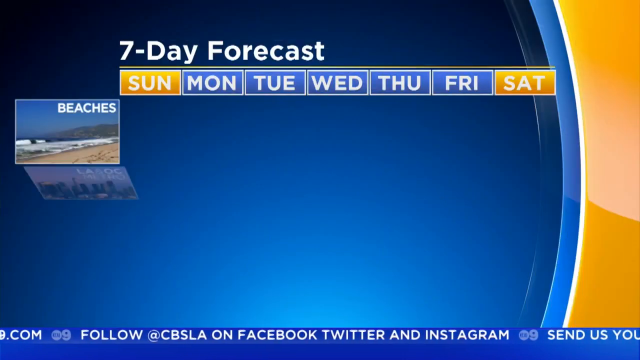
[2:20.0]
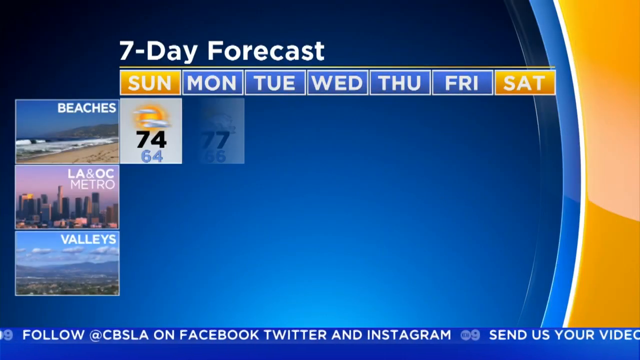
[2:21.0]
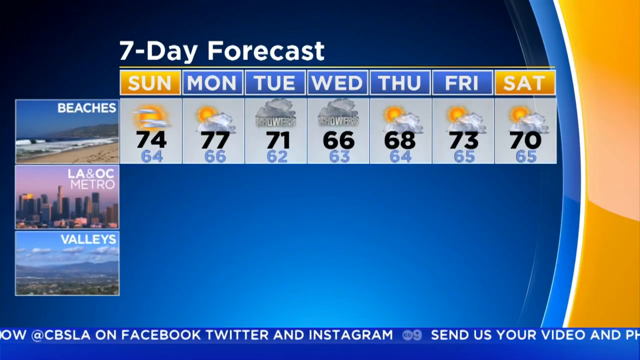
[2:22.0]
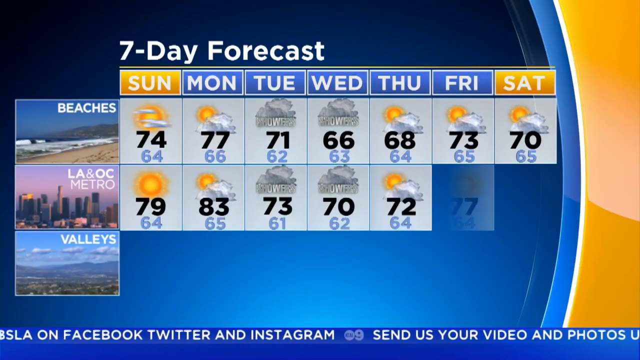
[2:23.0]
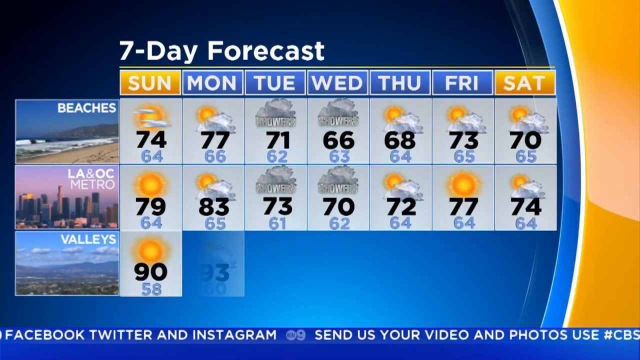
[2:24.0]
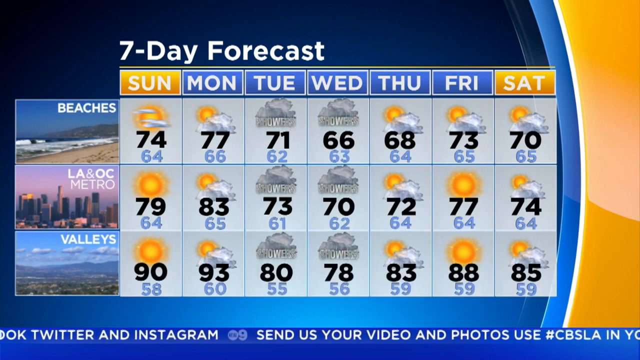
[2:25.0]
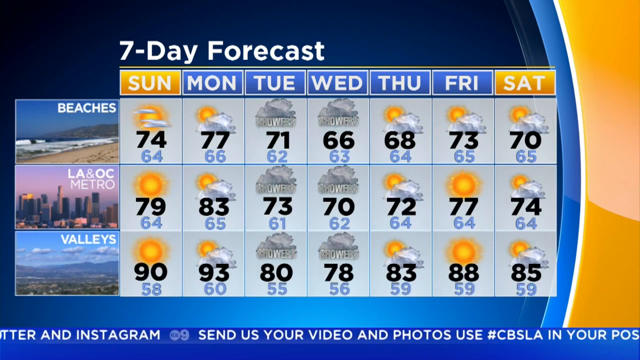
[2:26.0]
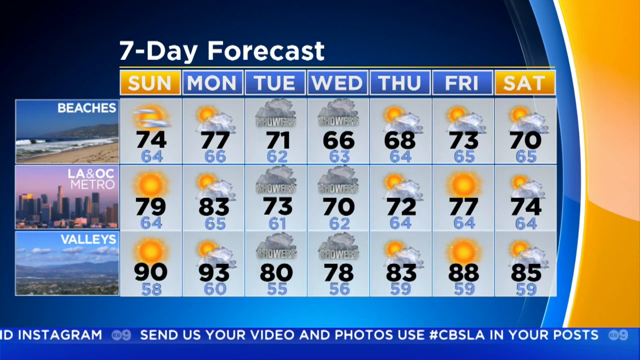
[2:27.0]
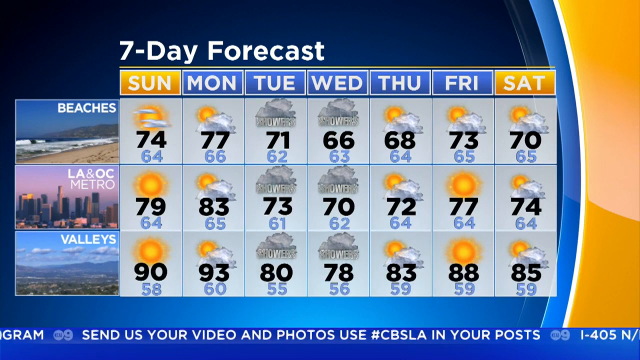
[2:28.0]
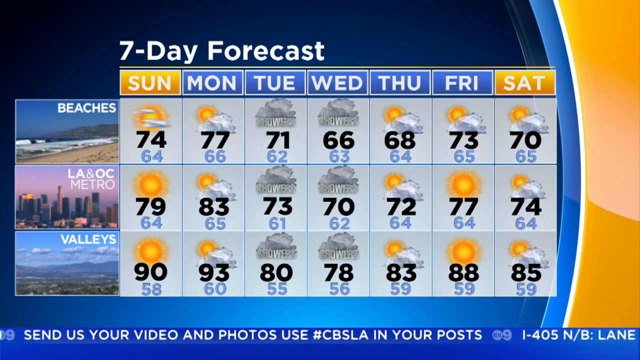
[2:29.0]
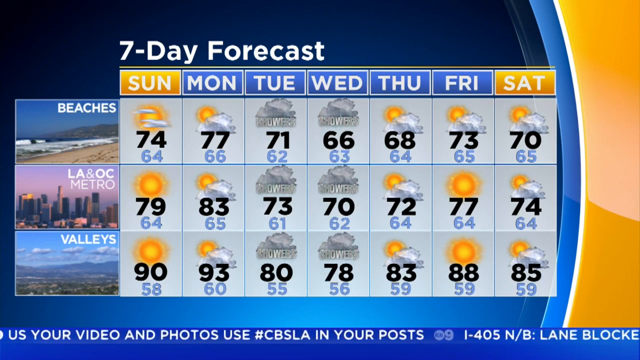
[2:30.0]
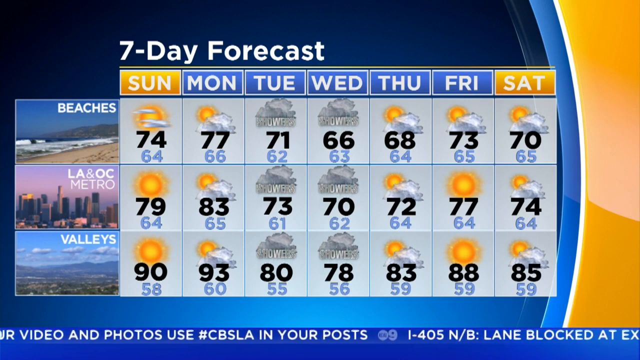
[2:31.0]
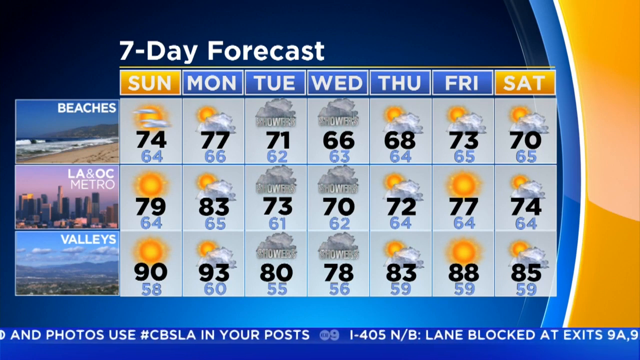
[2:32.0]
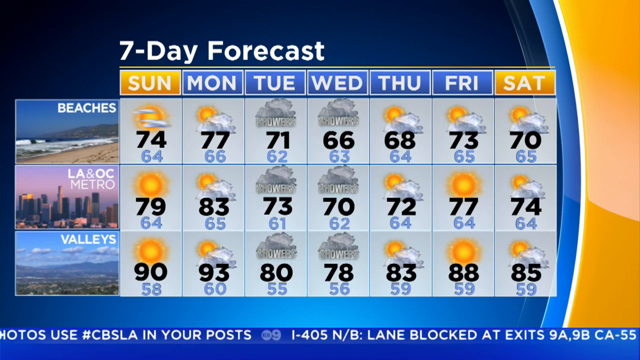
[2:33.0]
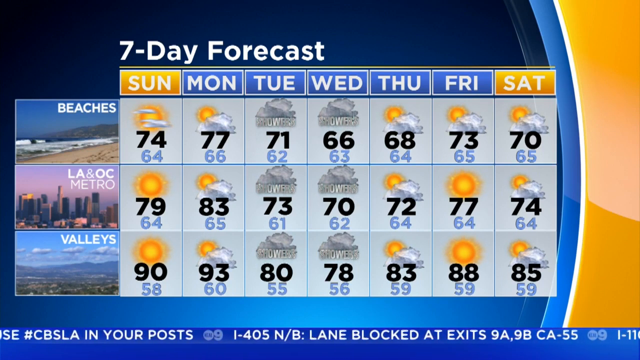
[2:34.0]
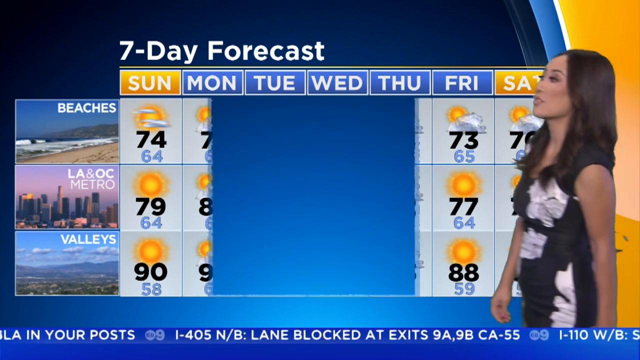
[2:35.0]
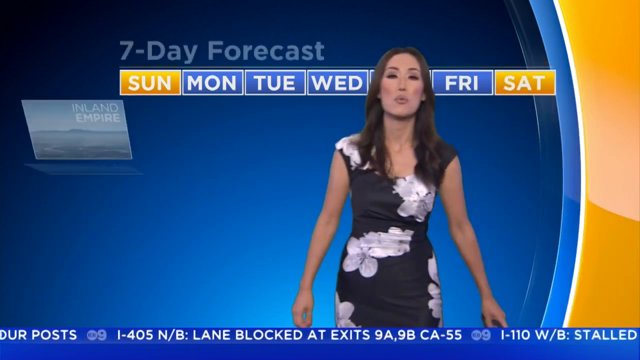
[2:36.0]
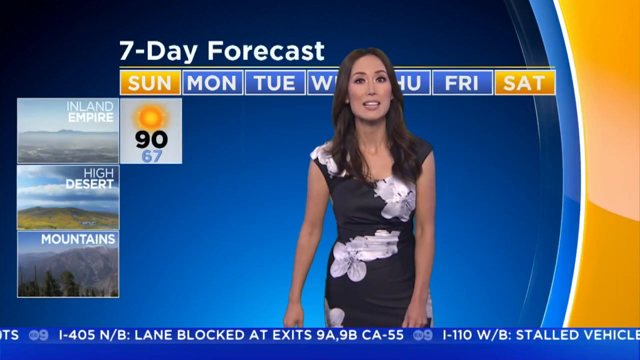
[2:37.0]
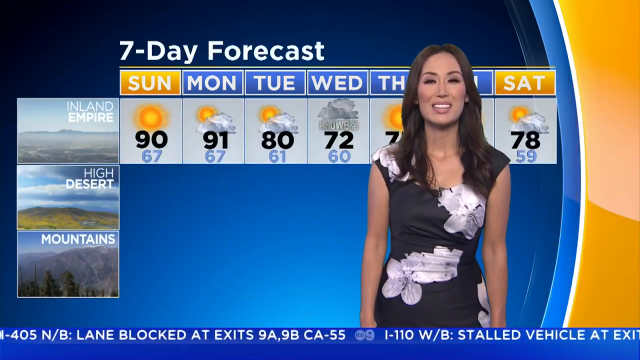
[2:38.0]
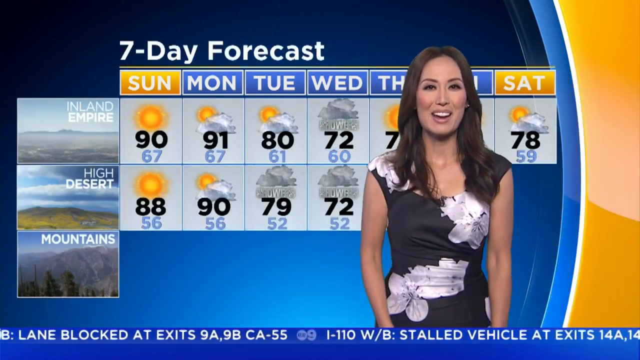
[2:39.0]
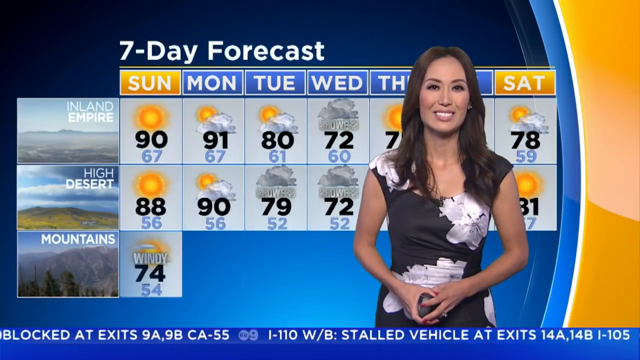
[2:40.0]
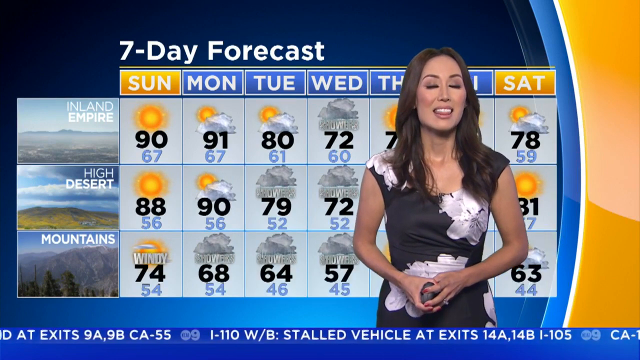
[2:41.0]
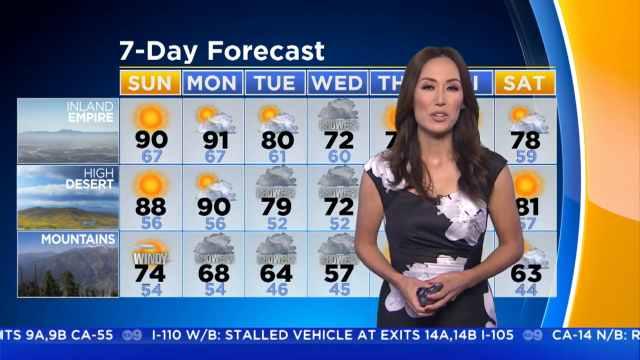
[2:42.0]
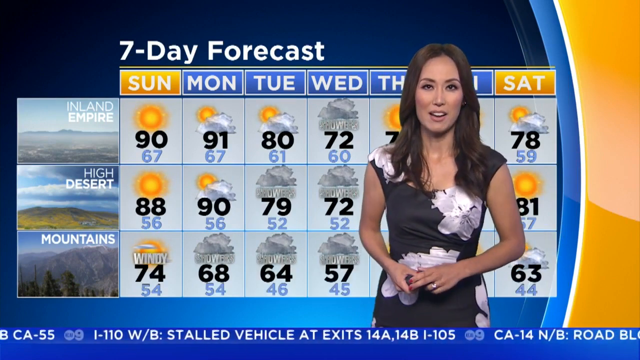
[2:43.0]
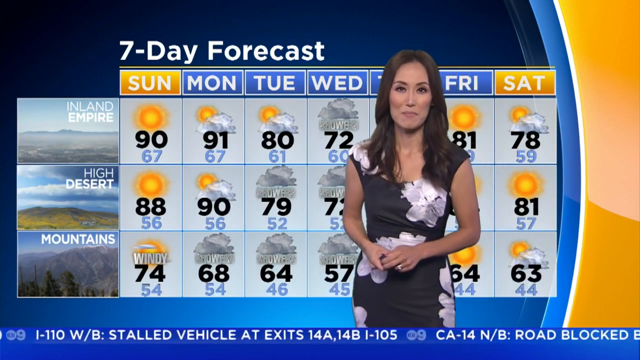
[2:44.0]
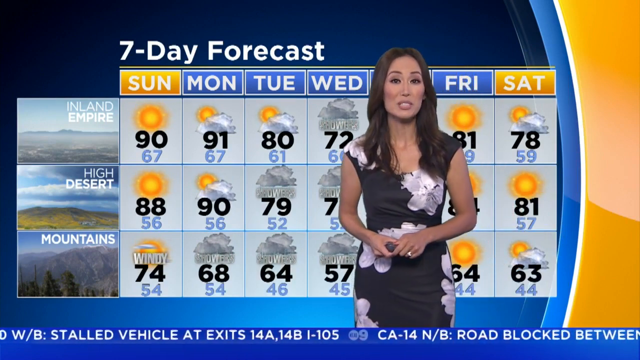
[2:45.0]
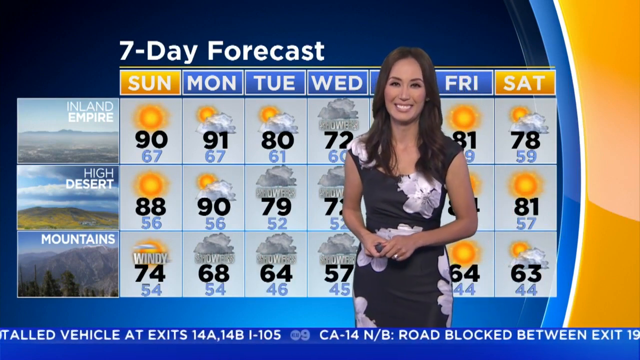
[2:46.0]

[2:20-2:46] A "seven-day forecast" screen lists Sunday through Saturday for "beaches," "LA and OC metro" and "valleys," with temperatures for each day that are very similar. The valleys look the hottest, reaching 90 degrees on Sunday; the beaches stay around 70, and LA OC metro is probably around the high 70s. A weather lady comes on screen: she has a slim build, red nail polish, great teeth, long brunette hair, and a white and black dress with white flowers on it. The forecast continues with the "inland empire" ranging from 90 degrees high to 72 degrees, then the high desert and the mountains, which are the coolest at around 60 or the low 60s. She holds a little clicker, smiles a lot and apparently has a wedding ring on her finger.